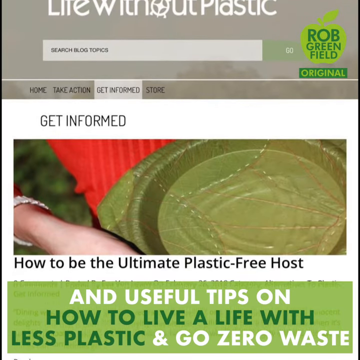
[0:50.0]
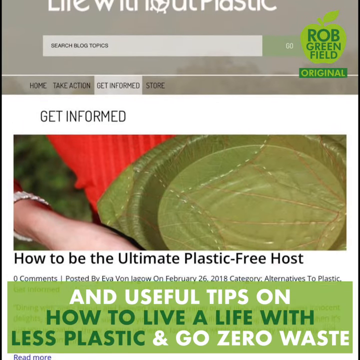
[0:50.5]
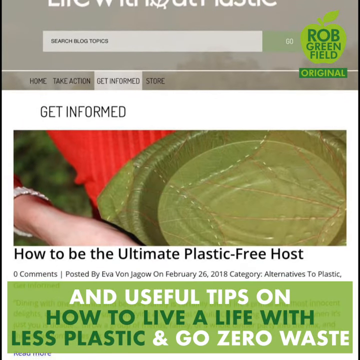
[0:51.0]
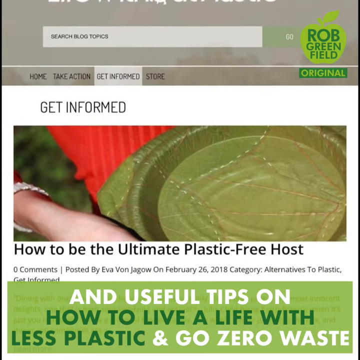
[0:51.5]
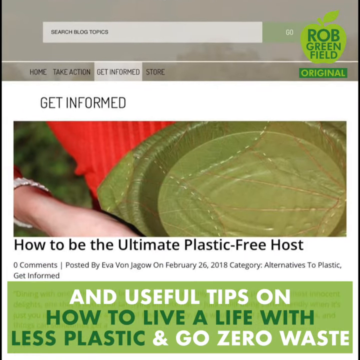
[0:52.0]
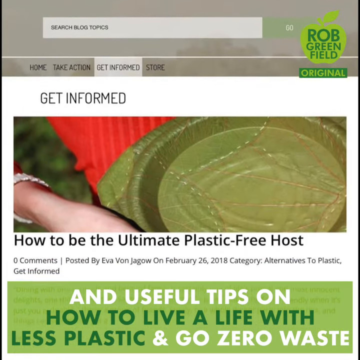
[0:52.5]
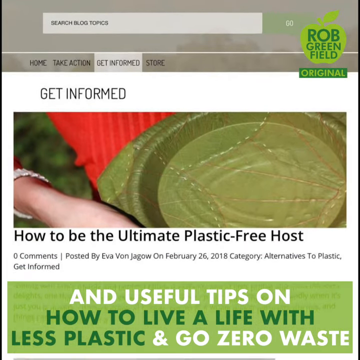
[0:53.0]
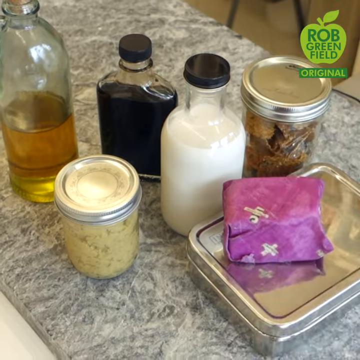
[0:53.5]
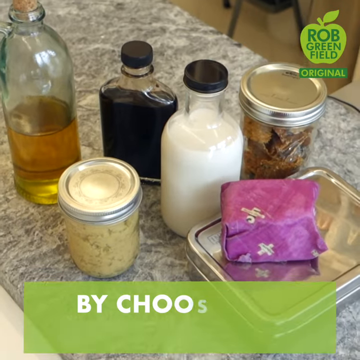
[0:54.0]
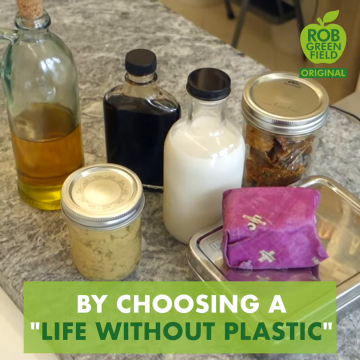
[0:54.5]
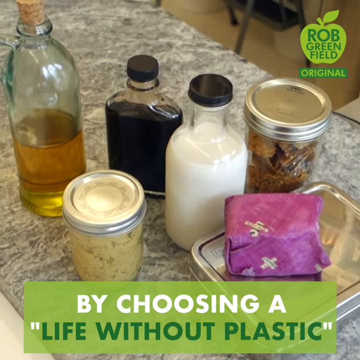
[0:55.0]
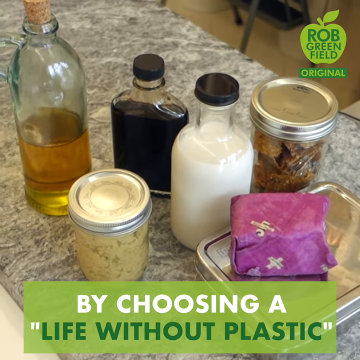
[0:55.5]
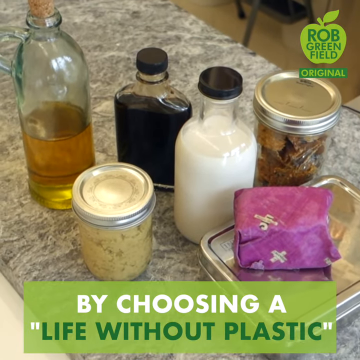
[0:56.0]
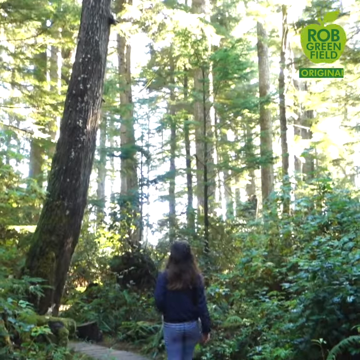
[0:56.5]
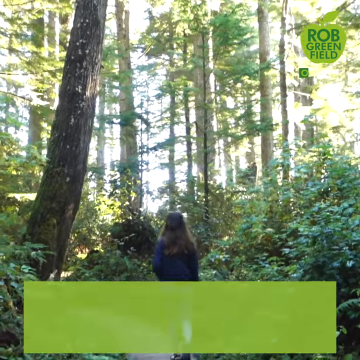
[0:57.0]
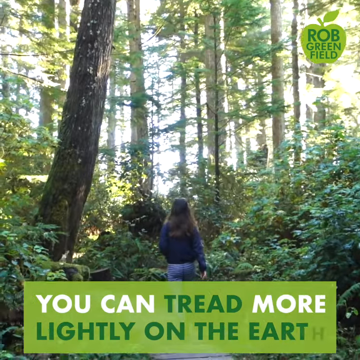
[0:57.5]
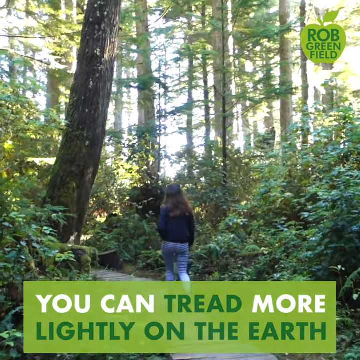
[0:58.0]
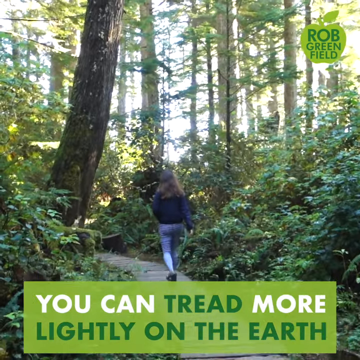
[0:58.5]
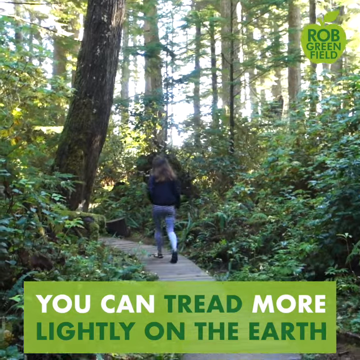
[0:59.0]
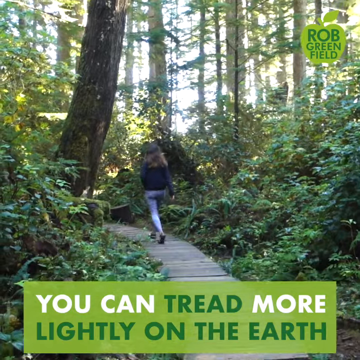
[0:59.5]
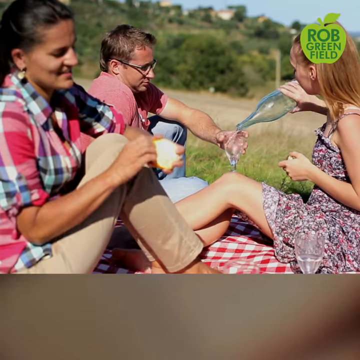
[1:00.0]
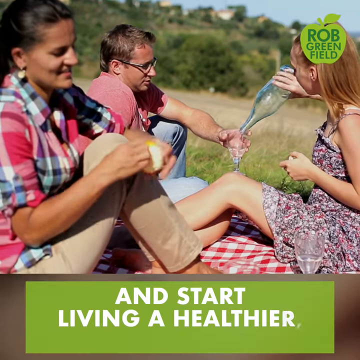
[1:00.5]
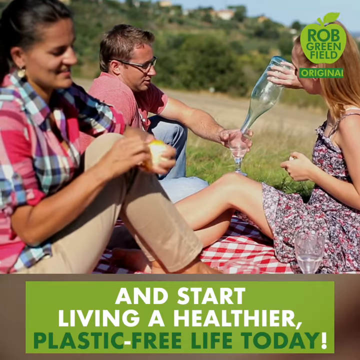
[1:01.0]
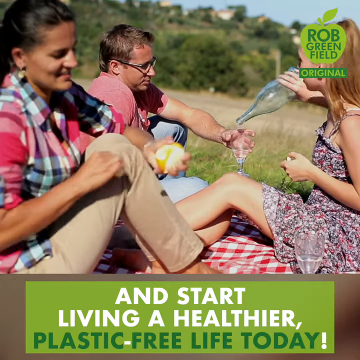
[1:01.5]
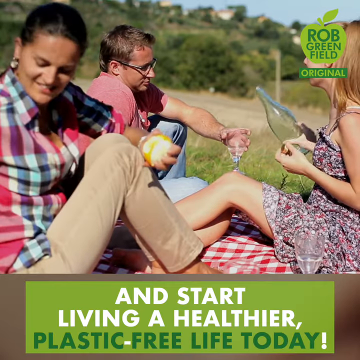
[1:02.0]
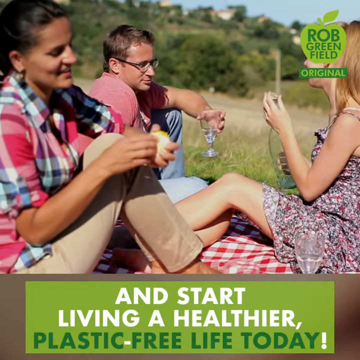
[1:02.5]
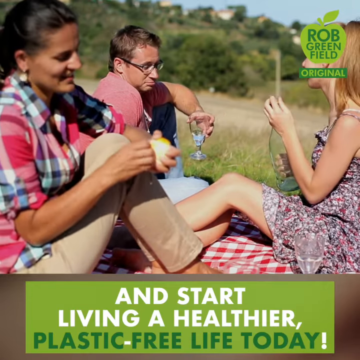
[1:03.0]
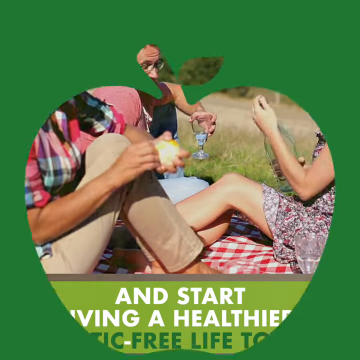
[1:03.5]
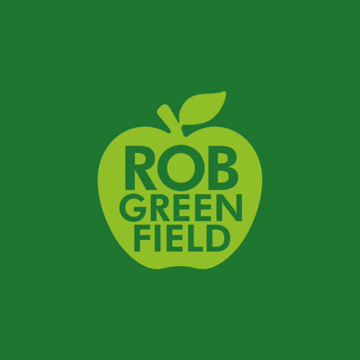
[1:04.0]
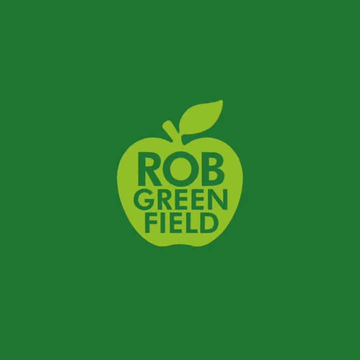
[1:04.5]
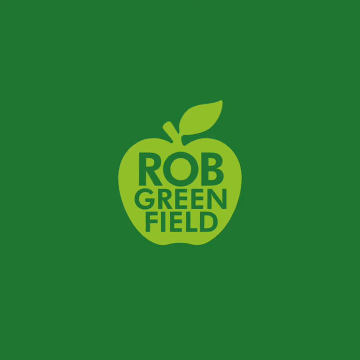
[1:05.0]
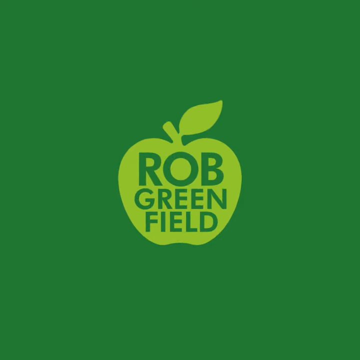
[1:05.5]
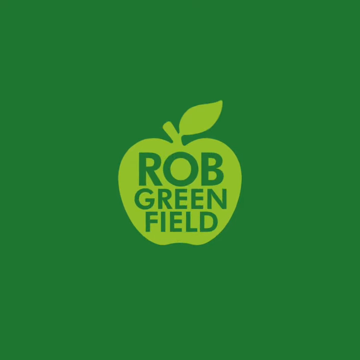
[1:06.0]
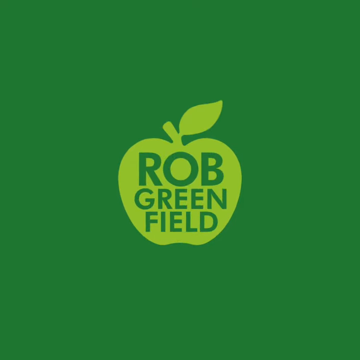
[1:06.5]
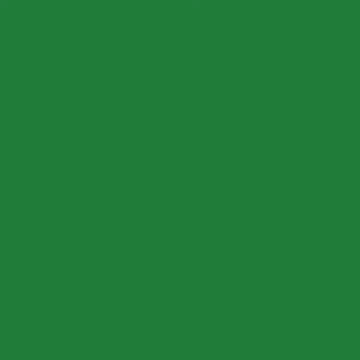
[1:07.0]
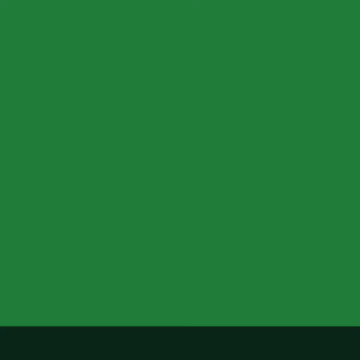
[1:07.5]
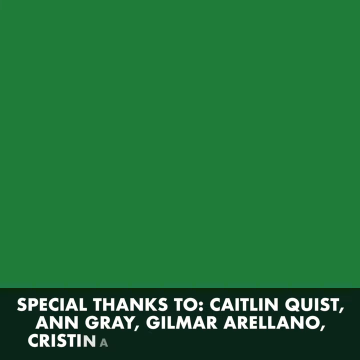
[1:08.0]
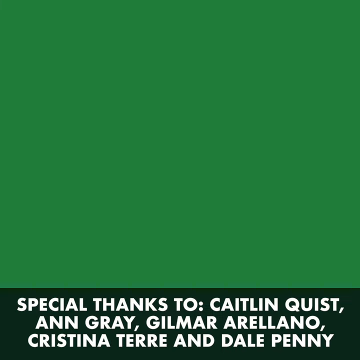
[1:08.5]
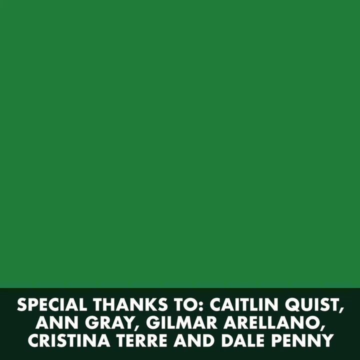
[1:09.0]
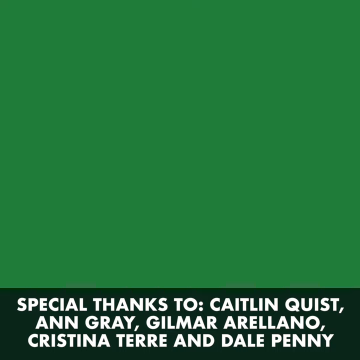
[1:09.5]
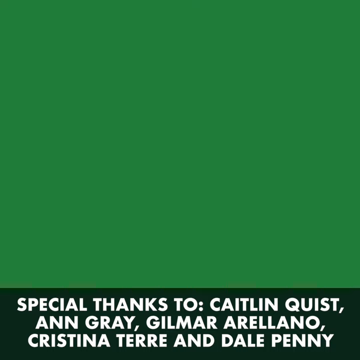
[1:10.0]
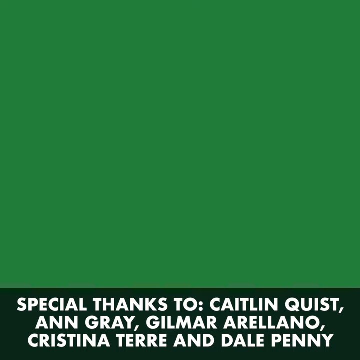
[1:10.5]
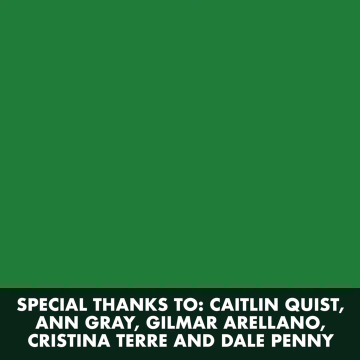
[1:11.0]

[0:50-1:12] The screen shows the object that looks like a pie plate; it is beige, sticks off the edge in a strange way, and looks like some kind of material covering a pie plate. A woman in a red shirt holds it, with only her hand and shirt visible. The page scrolls down and says "how to be the ultimate plastic free host". Then the text "by choosing a life without plastic" appears over a counter. On the counter are a clear glass bottle holding what looks like oil, two mason jars, one with white material that looks like potato salad and the other with some kind of brown material, two milk-looking jars, one holding milk and the other a dark liquid, and a tin food container with the beeswax wrap sitting on top of it. A woman walks on a path through the woods wearing jeans and a blue long-sleeve shirt; she has long hair and possibly glasses on top of her head. Text says "you can tread more lightly on the earth". Next, three people have a picnic, all sitting on a red and white gingham picnic blanket. What looks like a man in the background, in a pink shirt and jeans, holds a glass while a woman pours from a glass bottle; two of the glasses look like they hold water. She wears a little purple and pink sundress. In front of the man, another woman in beige pants and a plaid shirt smiles. The caption reads "and start living healthier plastic free life today". The view zooms out to the green apple with the dark green writing "Rob Greenfield", and text at the bottom says "special thanks to Caitlin Quist, Anne Gray, Gilmar, Arieleno, Christina Terra, and Dale Penny".